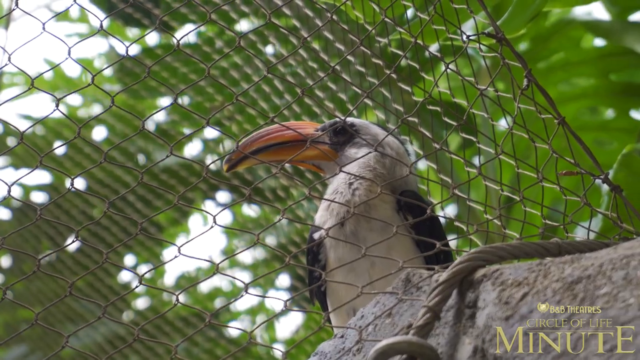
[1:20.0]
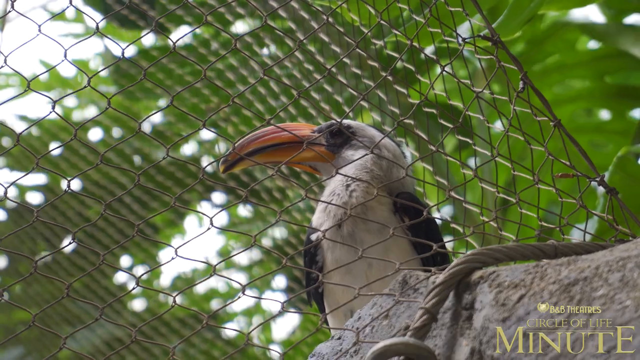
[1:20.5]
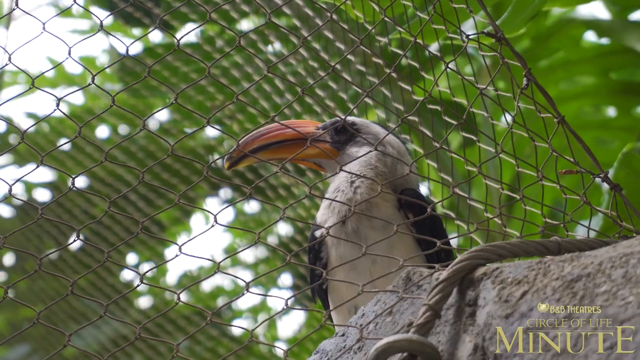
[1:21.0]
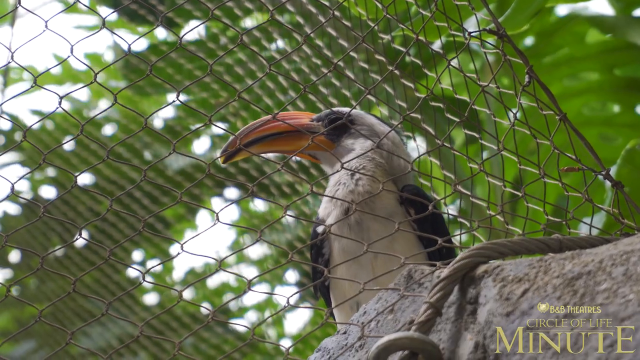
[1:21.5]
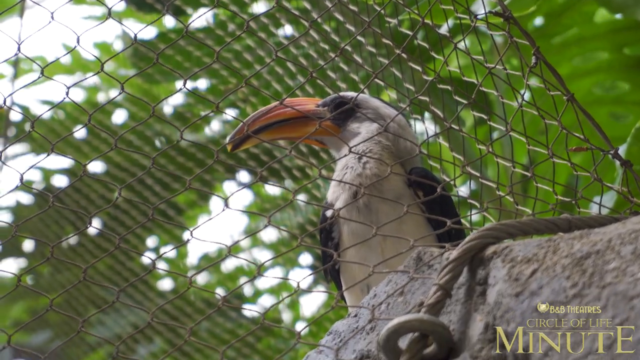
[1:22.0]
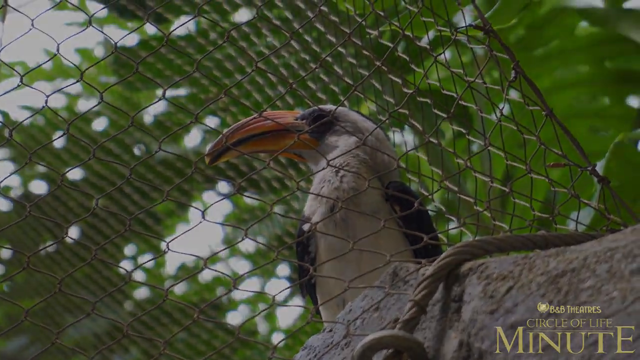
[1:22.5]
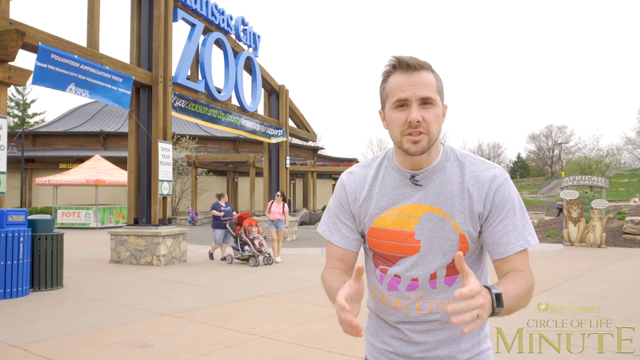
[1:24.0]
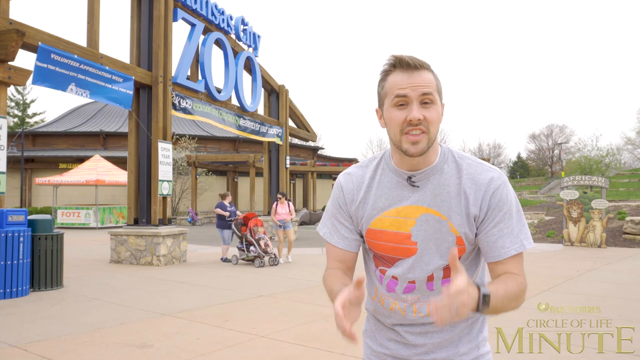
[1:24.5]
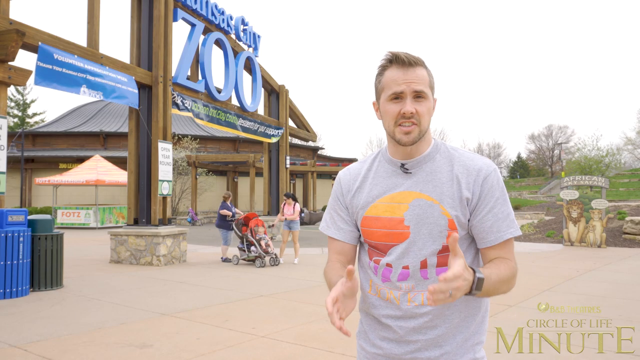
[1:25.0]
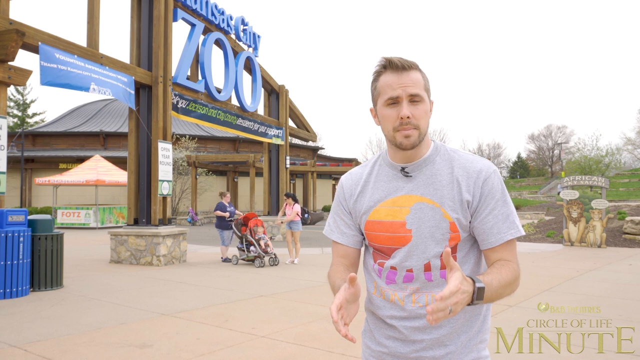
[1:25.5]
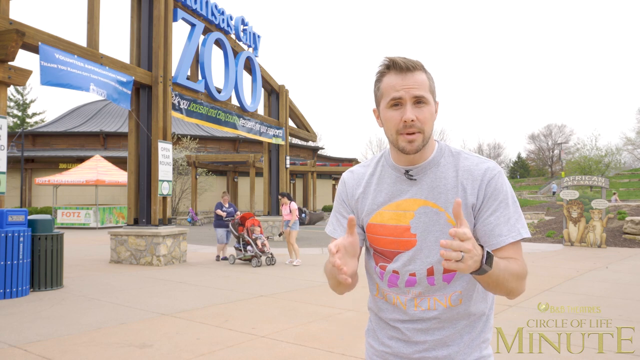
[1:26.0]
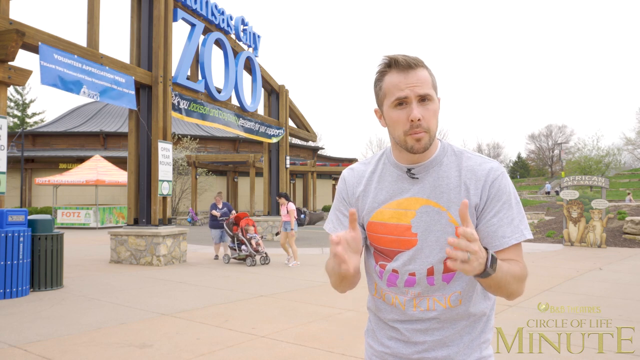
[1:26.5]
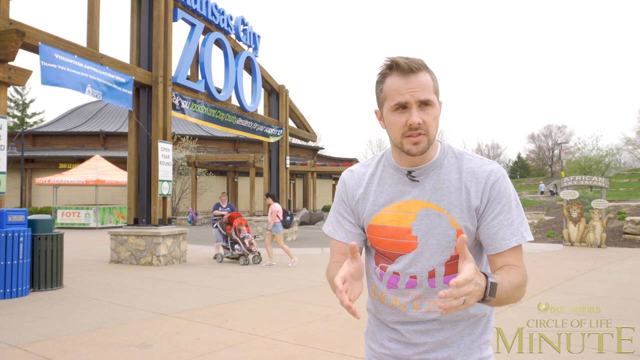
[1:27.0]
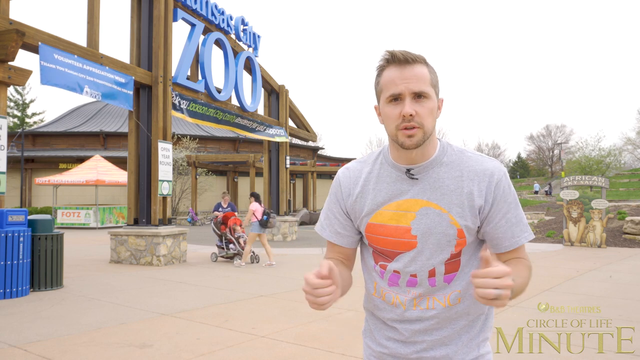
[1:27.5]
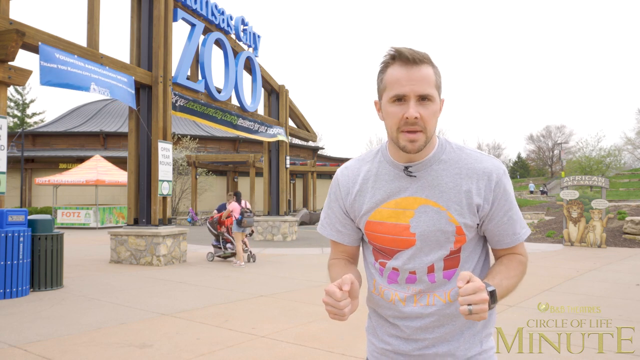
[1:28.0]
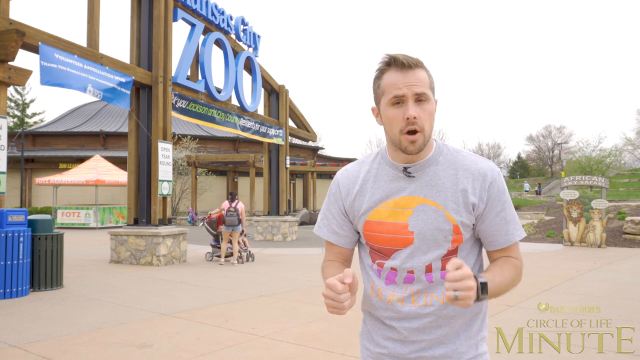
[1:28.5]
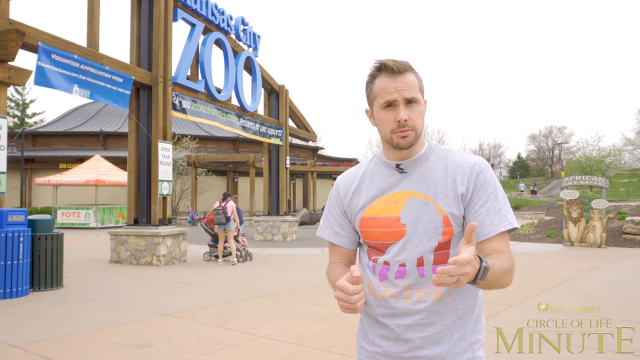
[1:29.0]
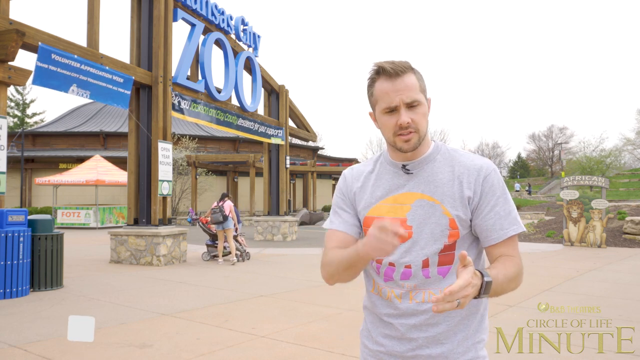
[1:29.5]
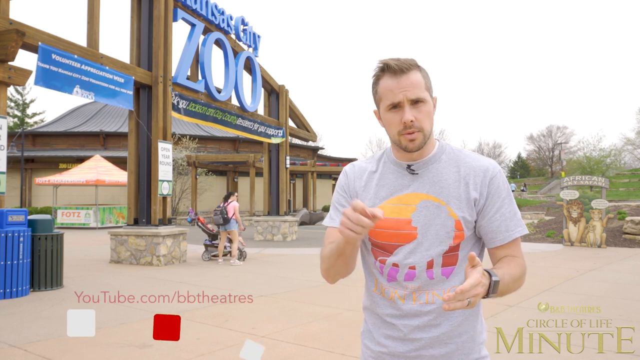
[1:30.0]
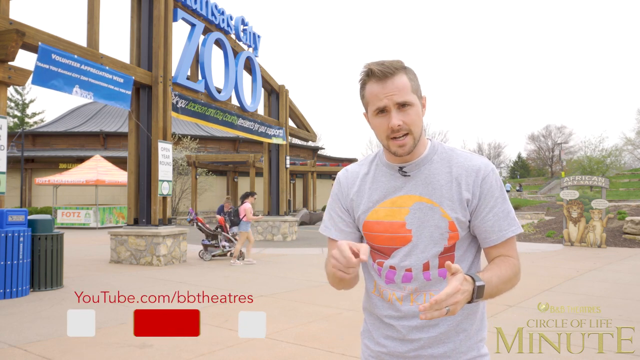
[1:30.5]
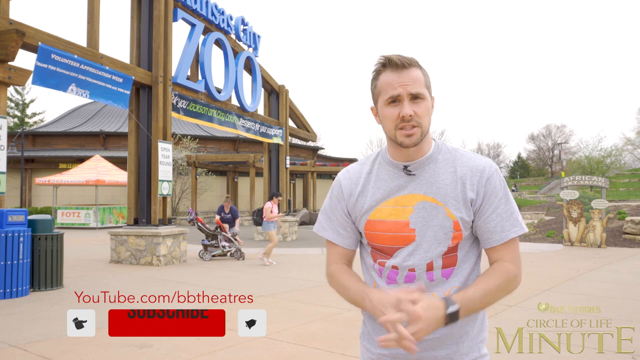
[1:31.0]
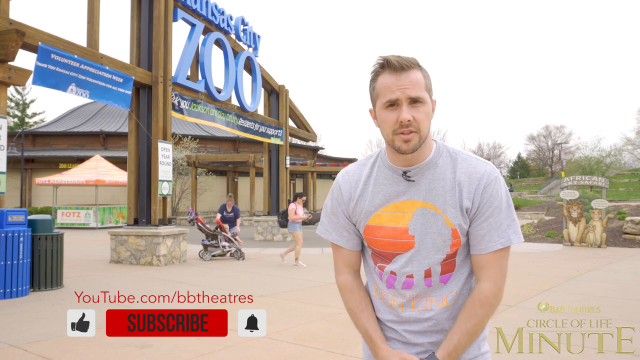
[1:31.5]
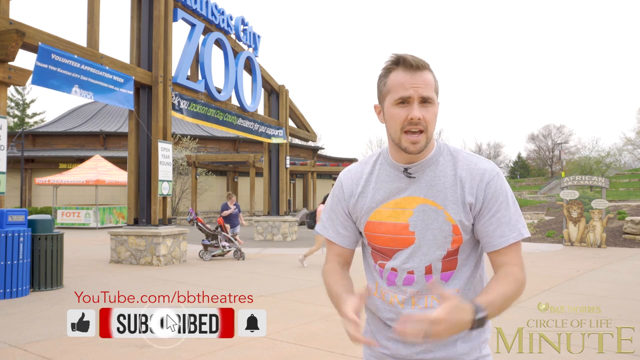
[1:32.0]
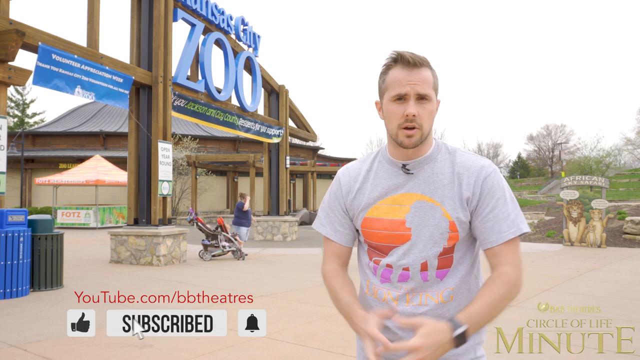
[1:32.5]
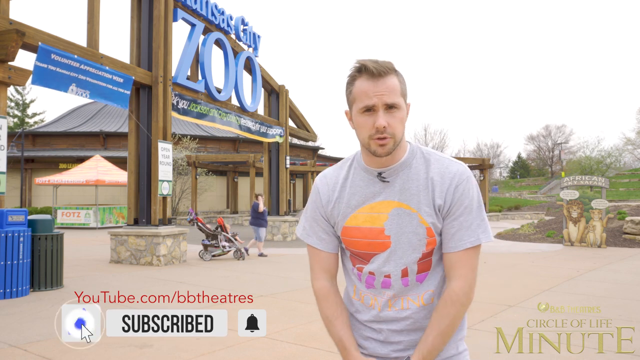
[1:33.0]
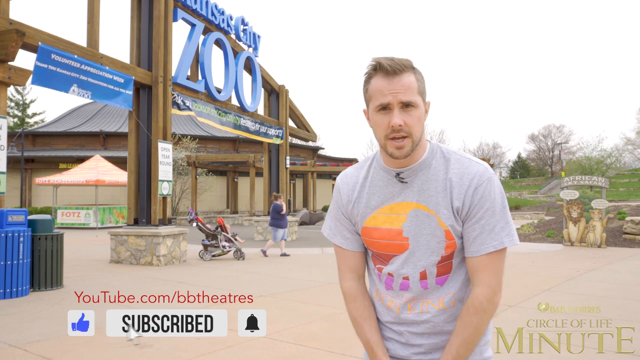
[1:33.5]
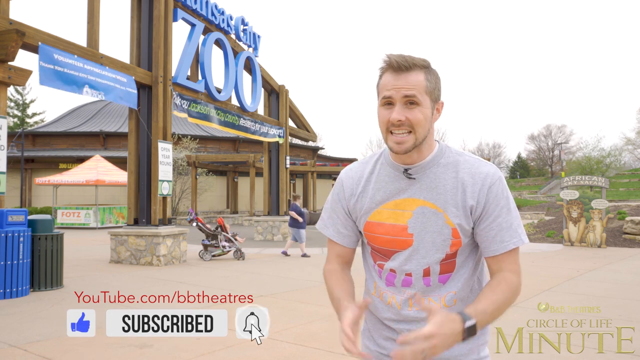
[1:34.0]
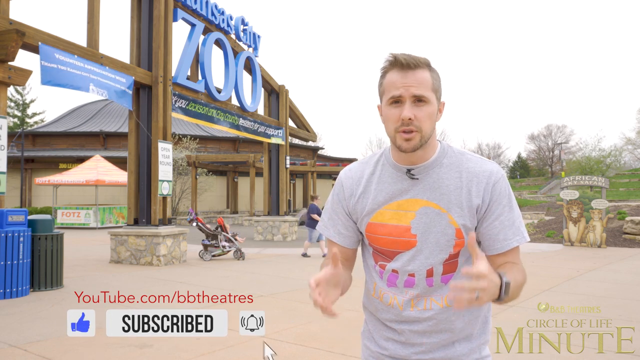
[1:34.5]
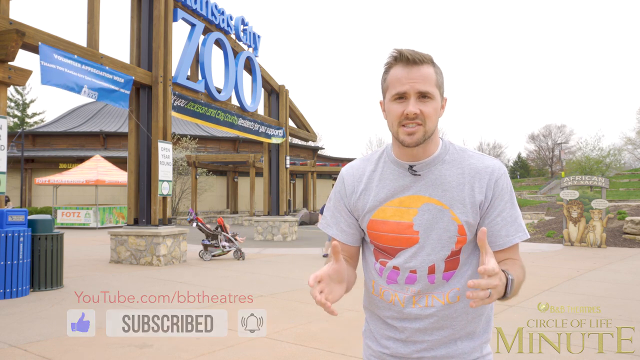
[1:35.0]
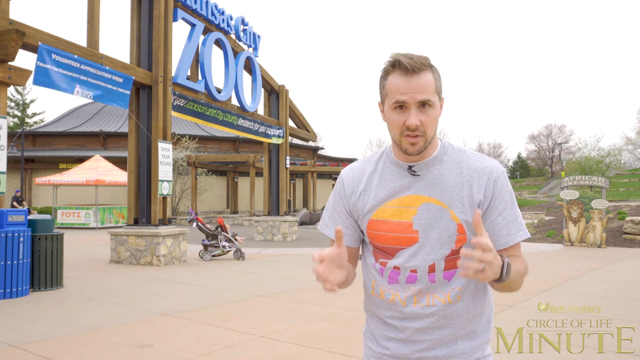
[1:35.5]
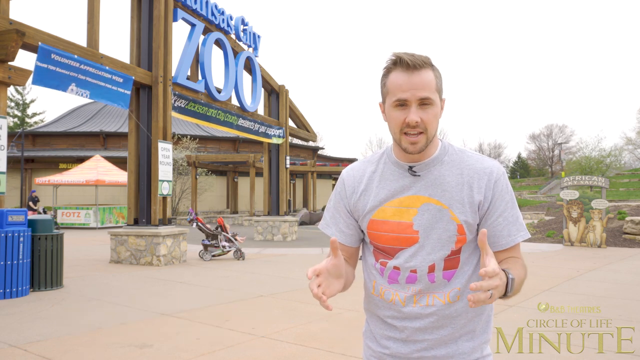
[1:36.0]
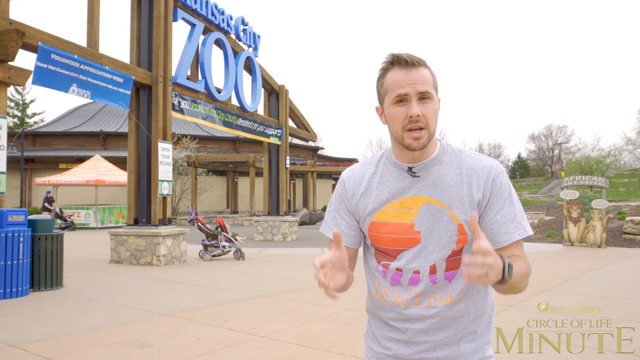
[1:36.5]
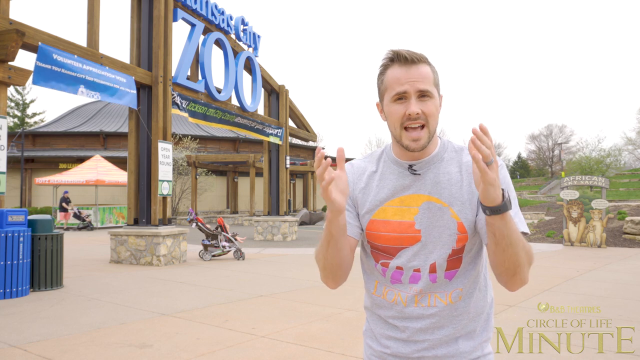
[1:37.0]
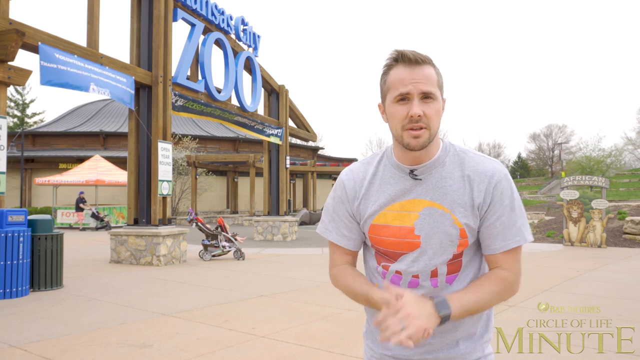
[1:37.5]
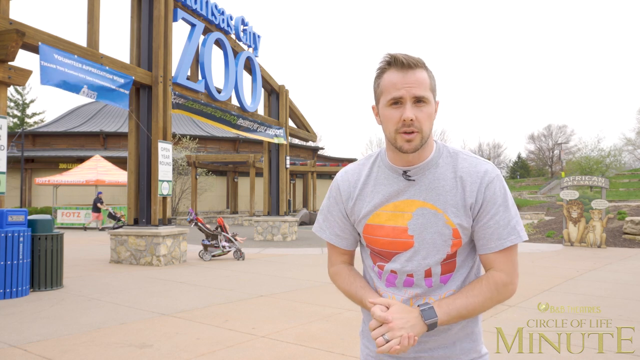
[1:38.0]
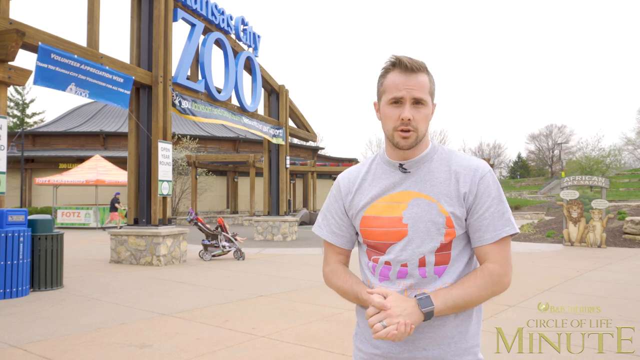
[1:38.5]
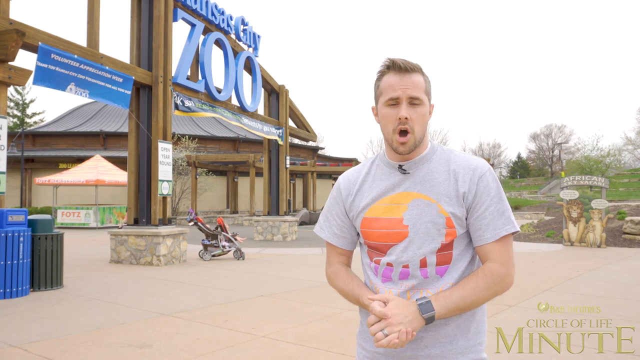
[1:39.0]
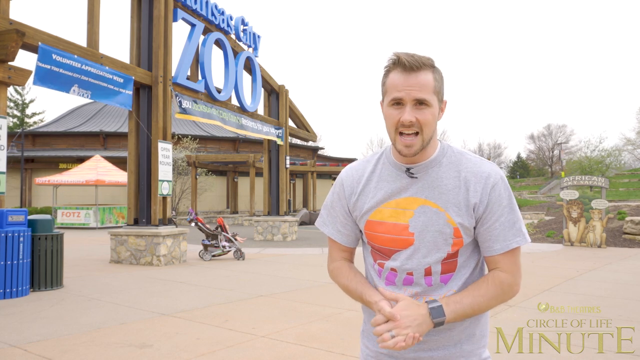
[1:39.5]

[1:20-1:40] The bird with the white body, black wings and orange beak is seen behind the wiring before the screen cuts to black. The short-haired blonde man in the gray t-shirt with the watch on his left wrist appears once more at the entry of the Kansas City Zoo, with the wooden structure behind him. There are cardboard lions that seem to be waving: a male, a female and a cub. Far in the background is an open field with a few trees. As the man continues to speak, two women behind him carry a stroller and then walk away. The YouTube link for the channel is displayed, along with like, bell and subscribe icons.